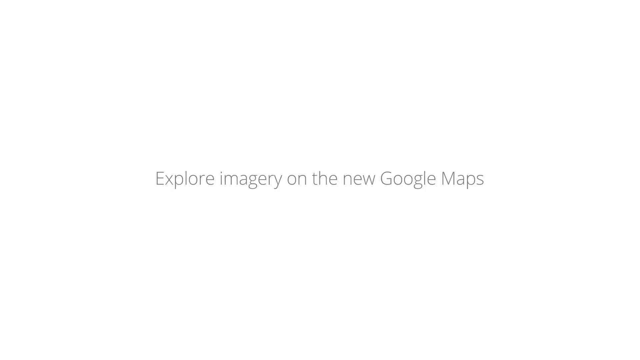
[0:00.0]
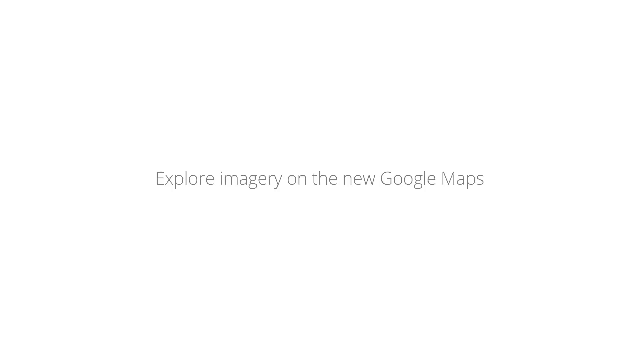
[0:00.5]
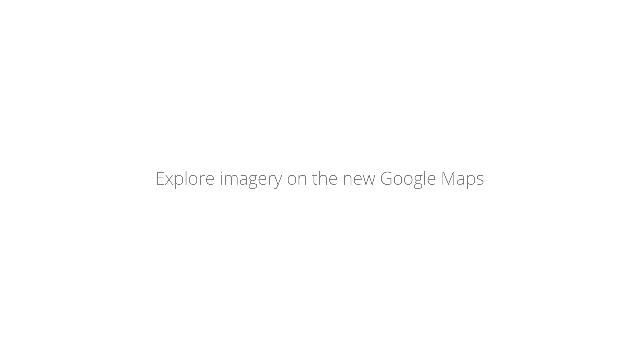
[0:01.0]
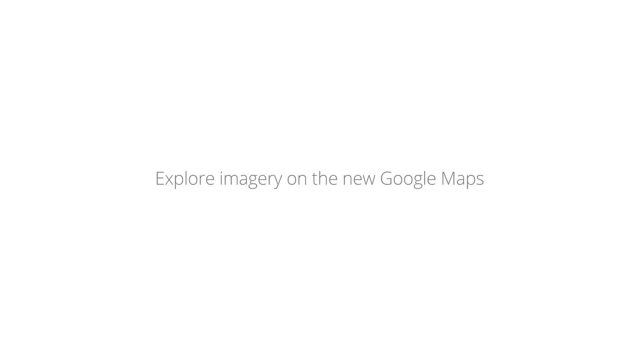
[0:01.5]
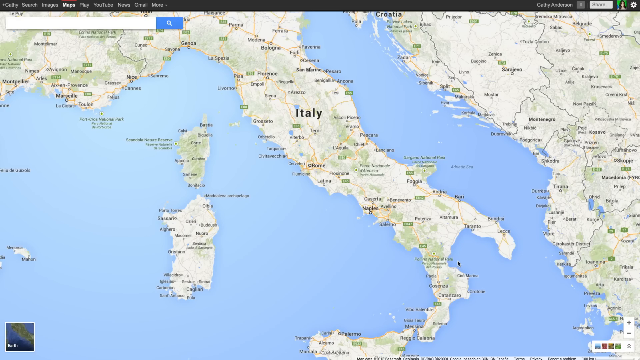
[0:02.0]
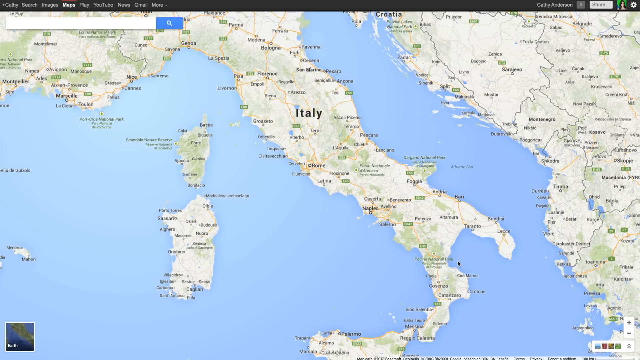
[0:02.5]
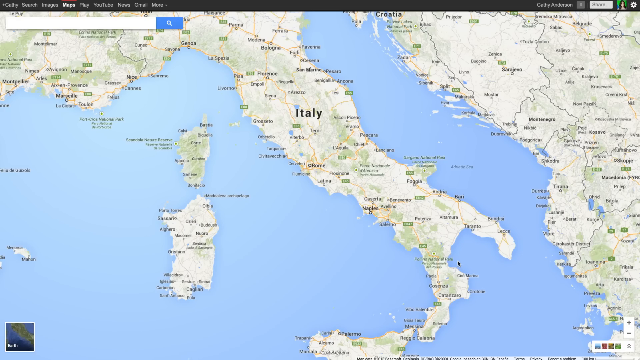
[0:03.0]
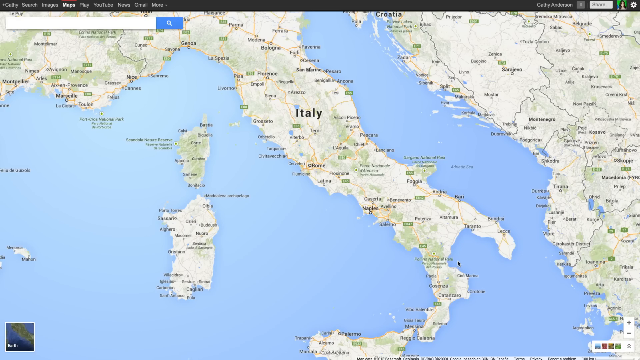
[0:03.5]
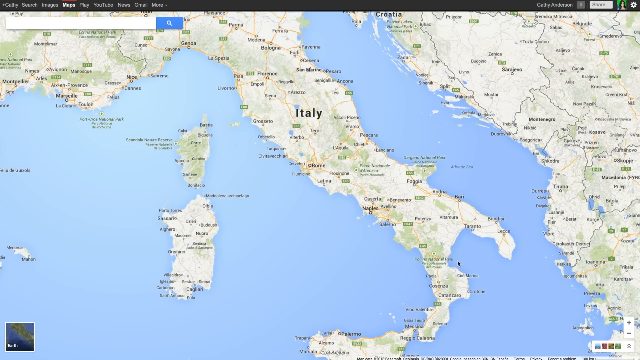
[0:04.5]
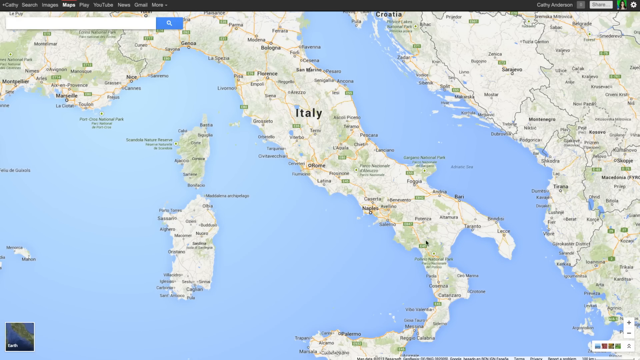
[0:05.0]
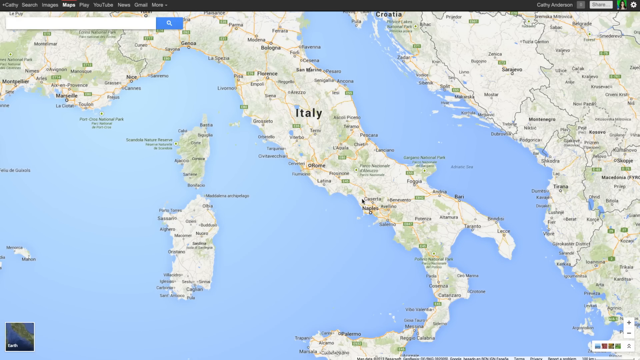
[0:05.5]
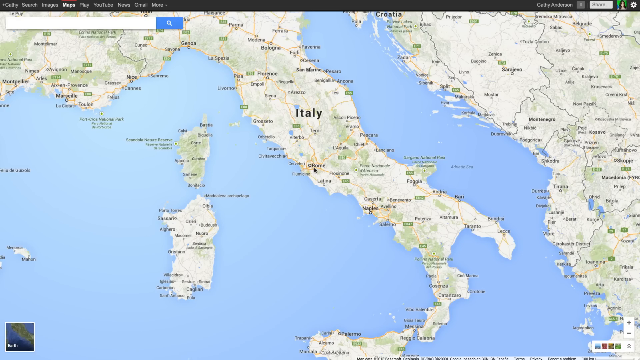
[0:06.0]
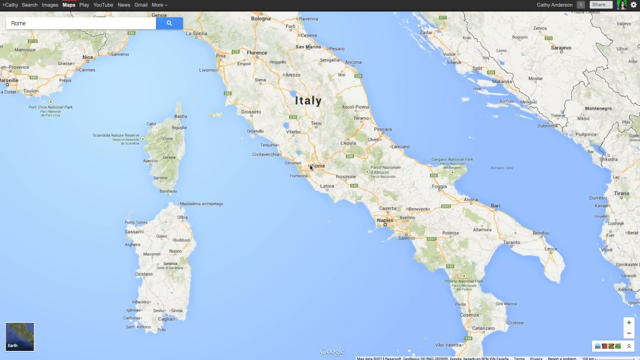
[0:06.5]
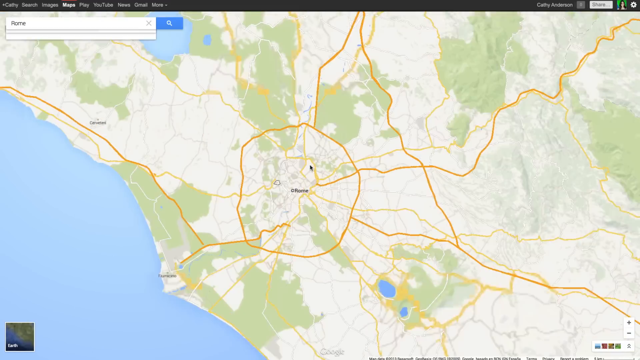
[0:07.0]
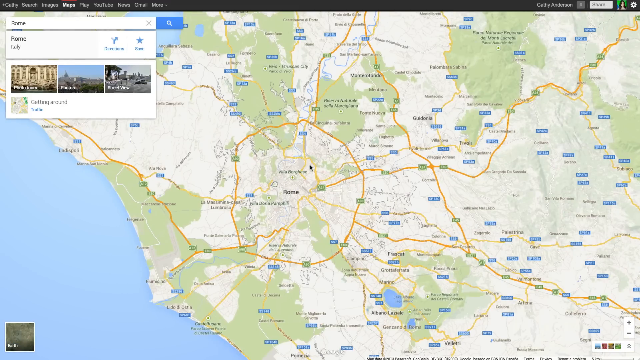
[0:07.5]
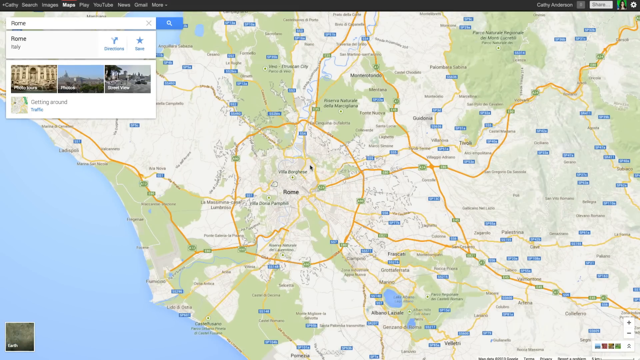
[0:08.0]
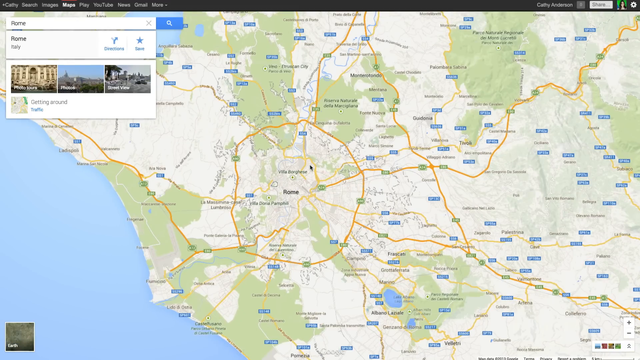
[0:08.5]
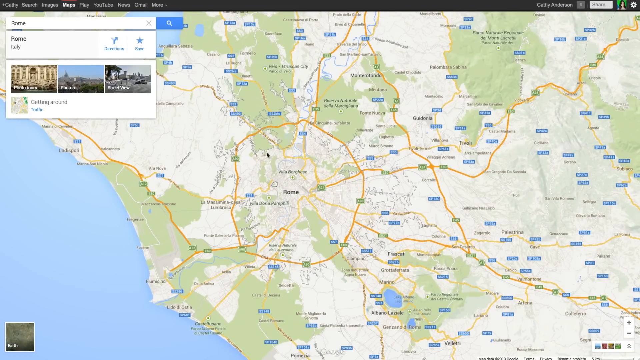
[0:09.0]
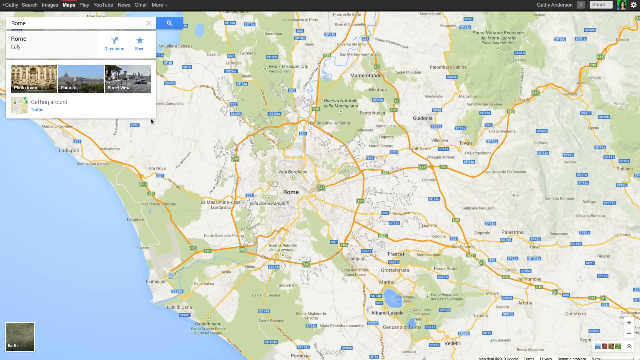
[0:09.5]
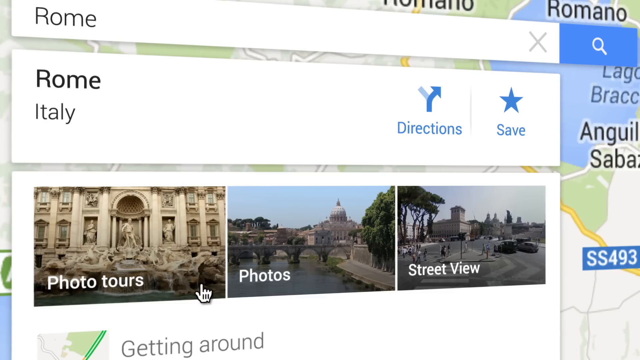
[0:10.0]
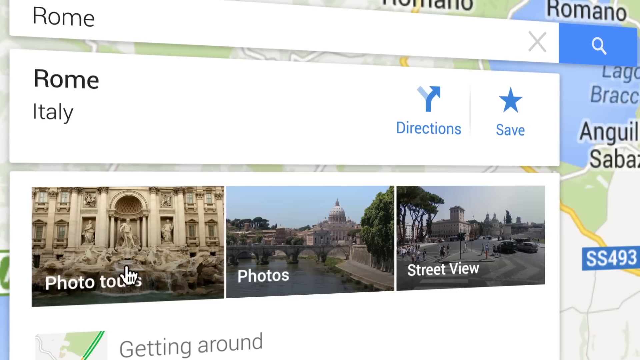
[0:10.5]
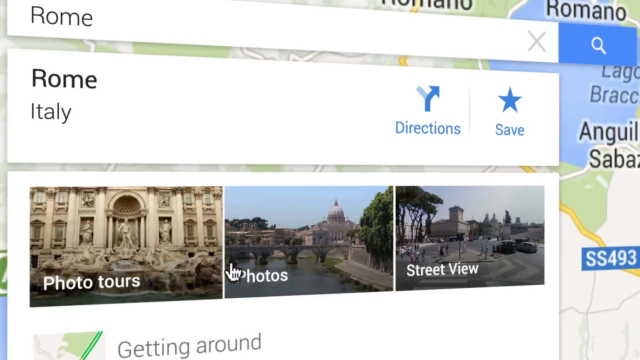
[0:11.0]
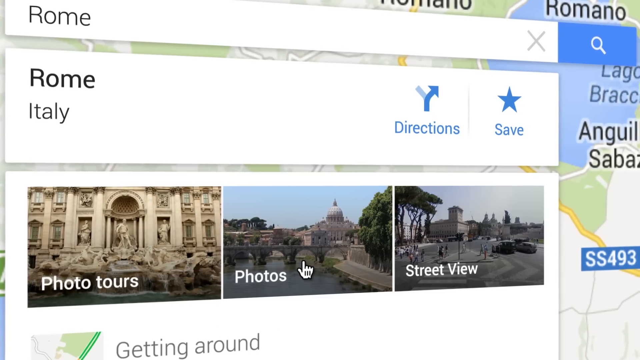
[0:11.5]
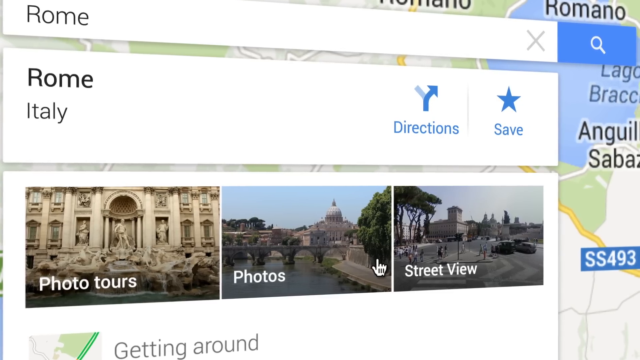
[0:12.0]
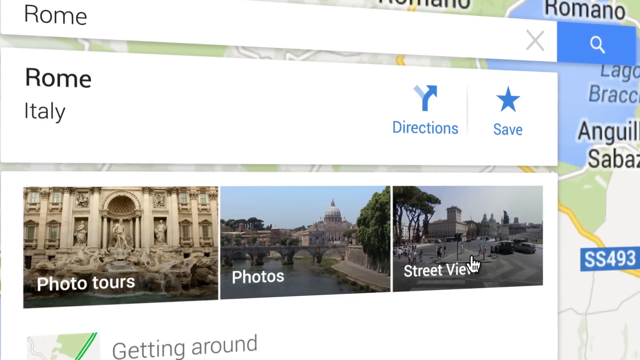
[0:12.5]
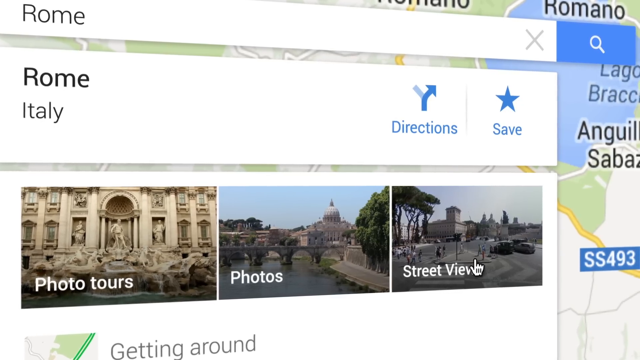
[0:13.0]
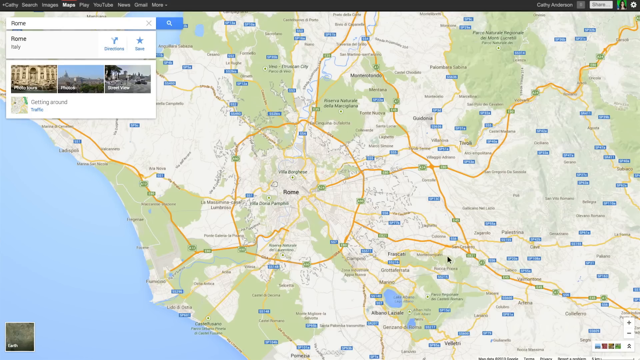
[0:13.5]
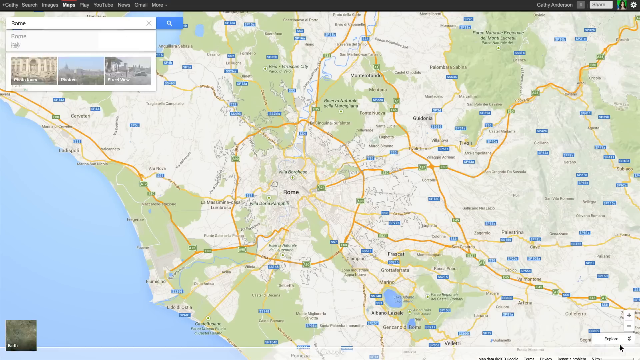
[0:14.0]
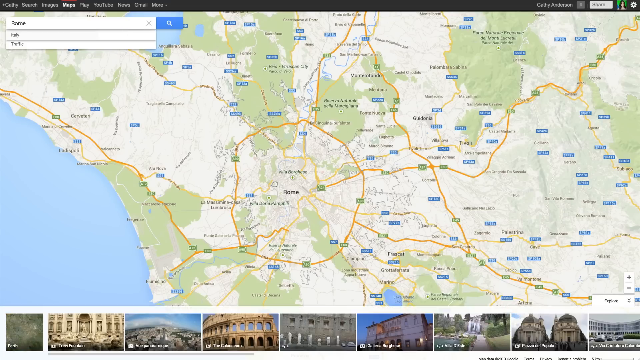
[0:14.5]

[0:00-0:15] A Google Maps screen starts on Italy and zooms in to what looks to be Rome. The person clicks another tab, and a closer image of Rome appears, or a series of three images: photo tours, photos, and street view. The little mouse hand hovers over each one. It appears to be some kind of show for Google Maps. Then gray text on a white background reads "explore imagery on a new Google Maps".